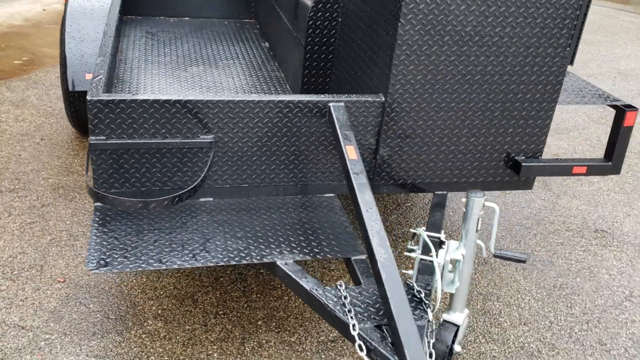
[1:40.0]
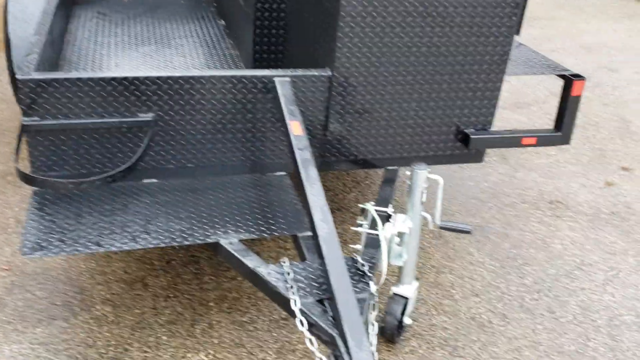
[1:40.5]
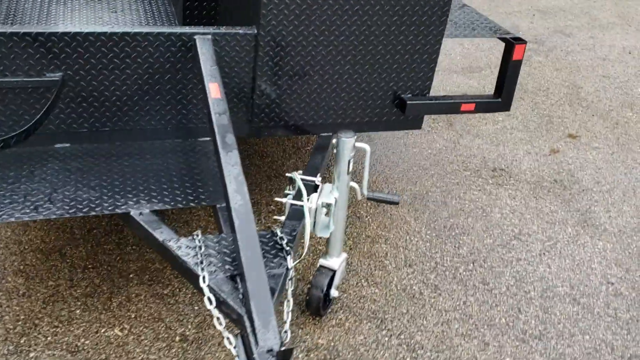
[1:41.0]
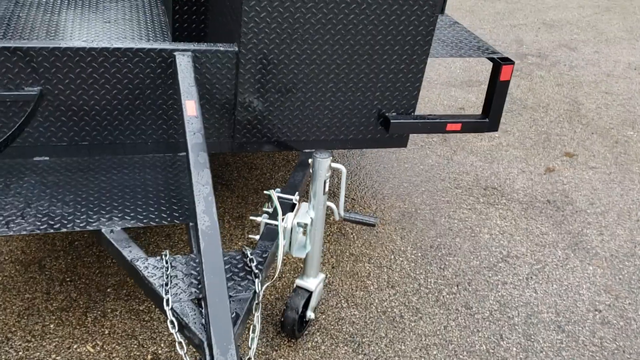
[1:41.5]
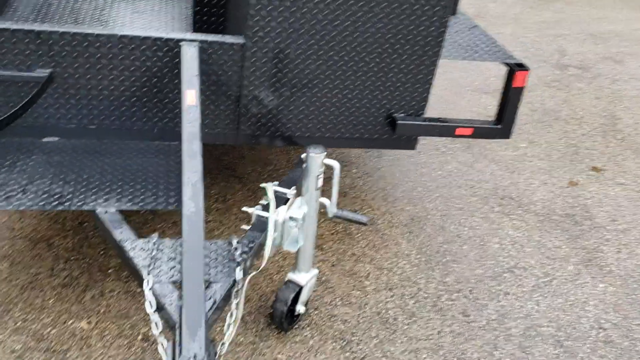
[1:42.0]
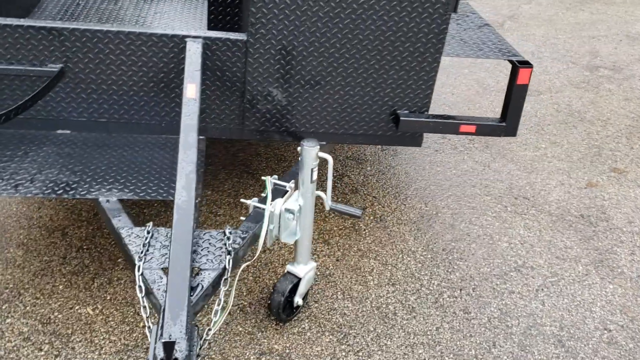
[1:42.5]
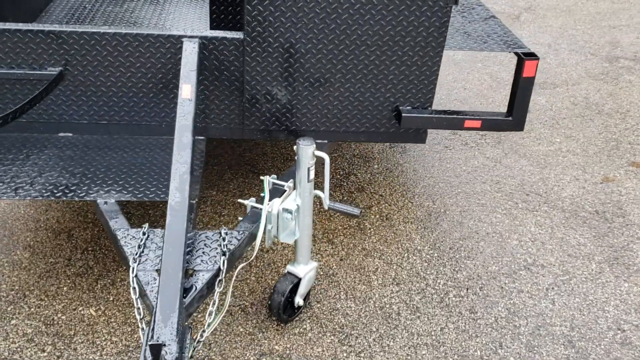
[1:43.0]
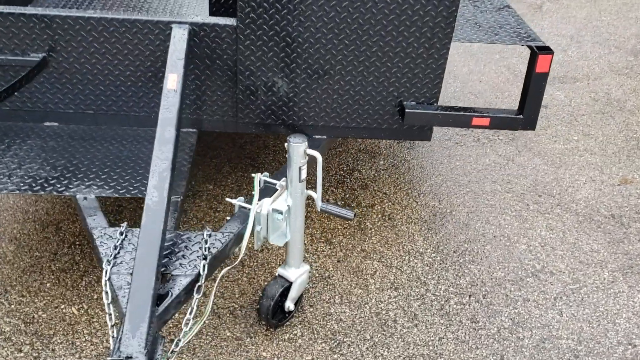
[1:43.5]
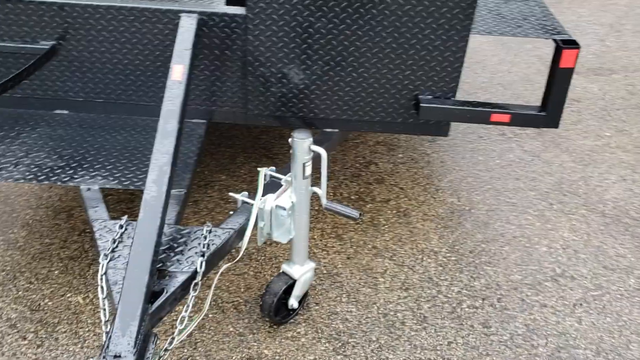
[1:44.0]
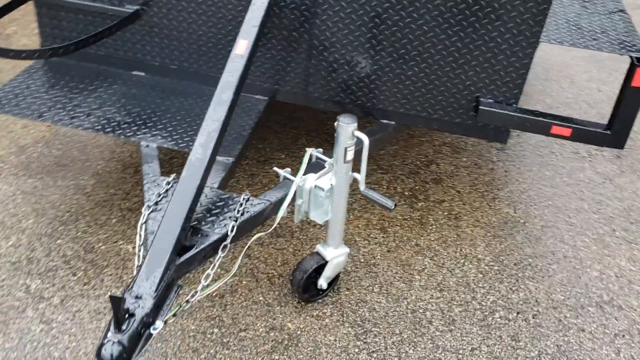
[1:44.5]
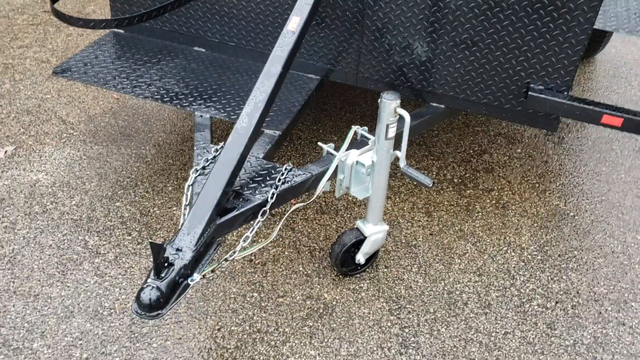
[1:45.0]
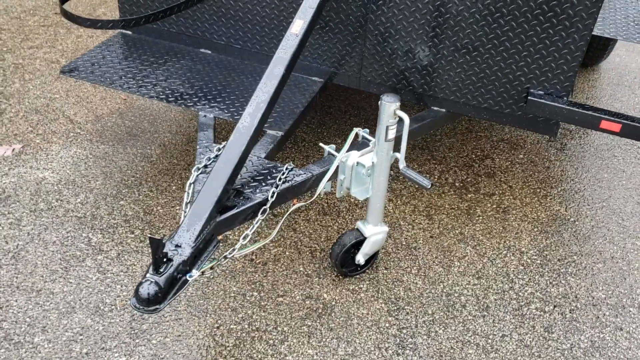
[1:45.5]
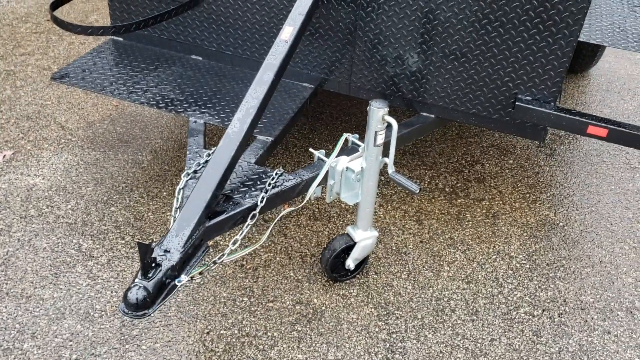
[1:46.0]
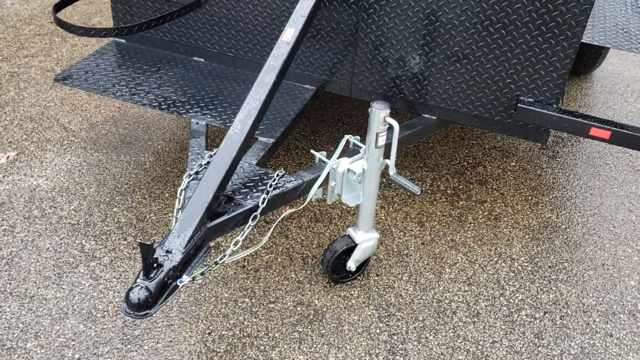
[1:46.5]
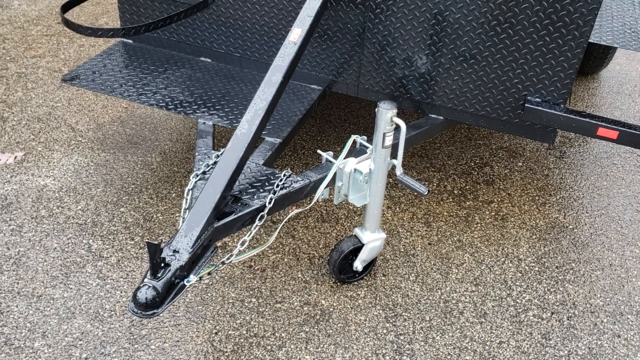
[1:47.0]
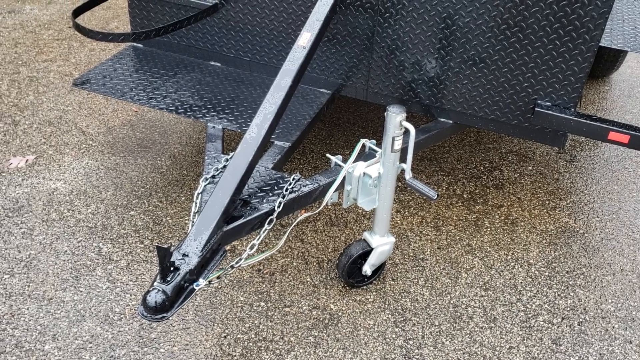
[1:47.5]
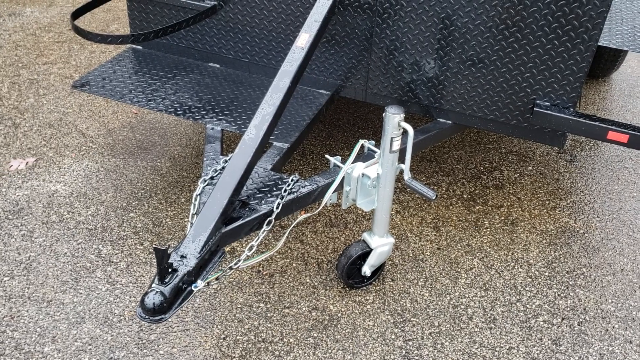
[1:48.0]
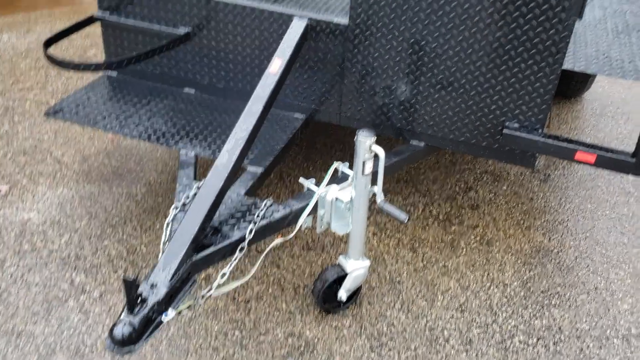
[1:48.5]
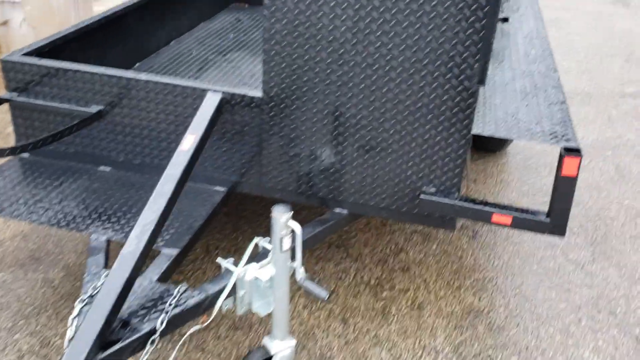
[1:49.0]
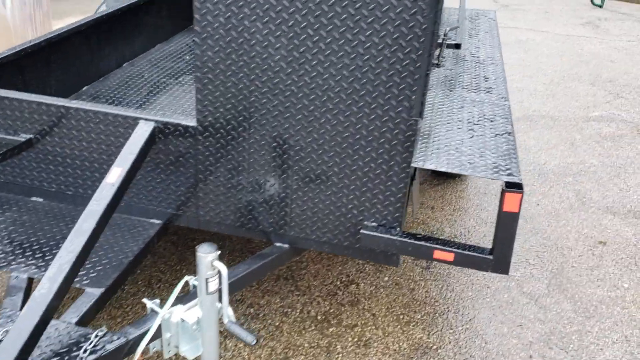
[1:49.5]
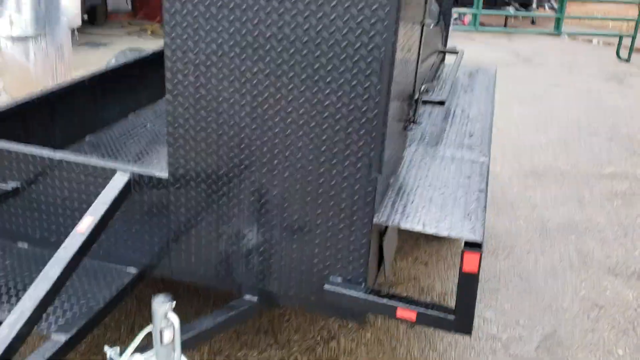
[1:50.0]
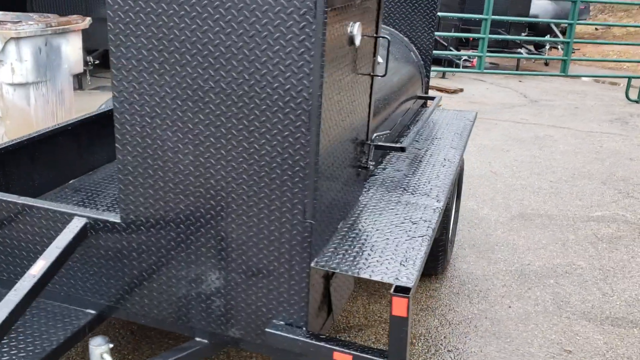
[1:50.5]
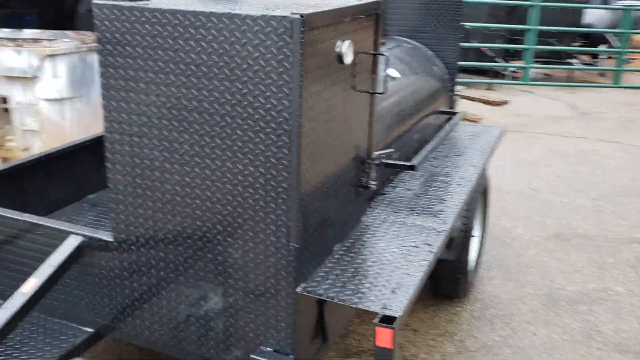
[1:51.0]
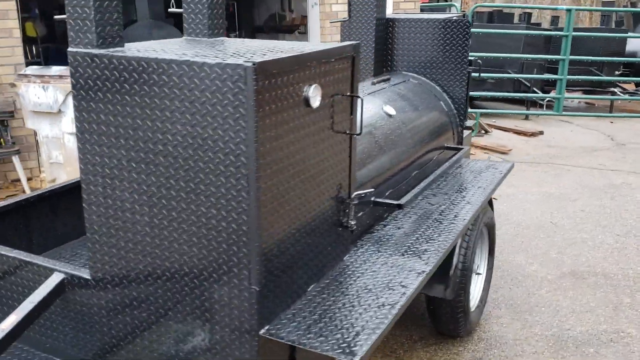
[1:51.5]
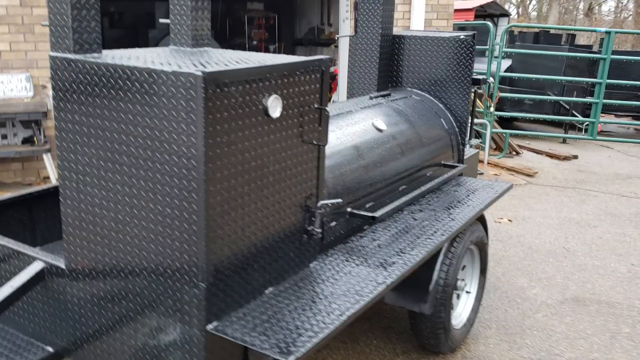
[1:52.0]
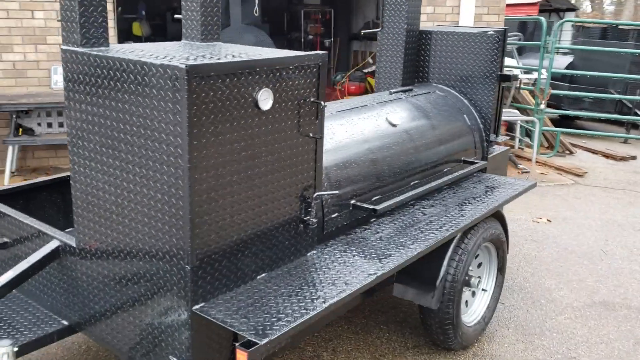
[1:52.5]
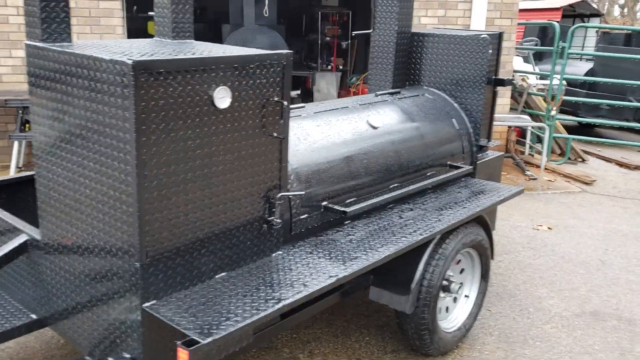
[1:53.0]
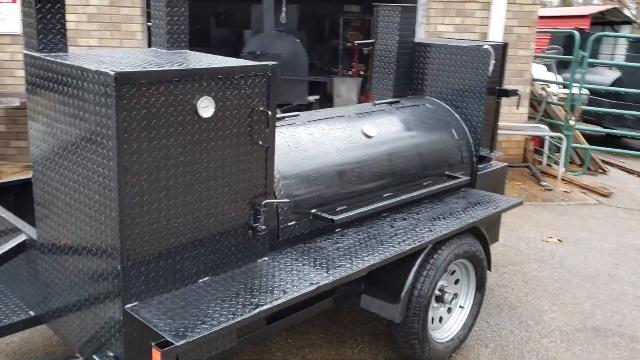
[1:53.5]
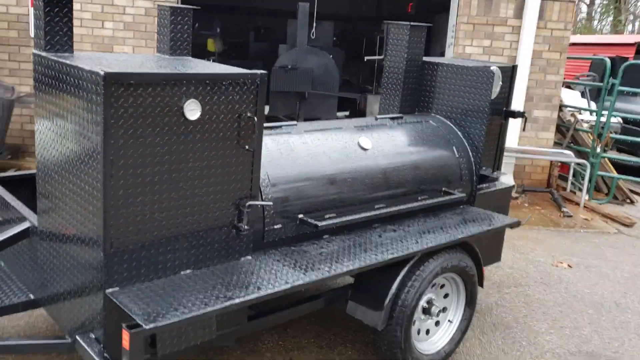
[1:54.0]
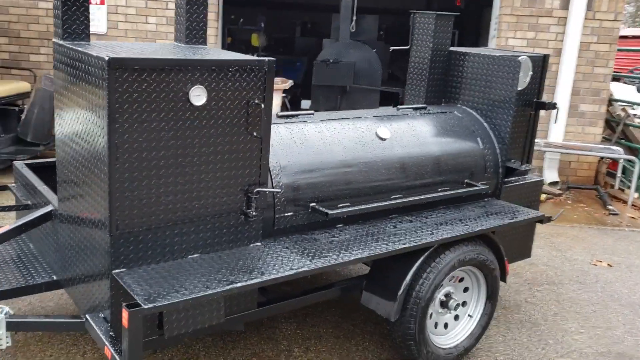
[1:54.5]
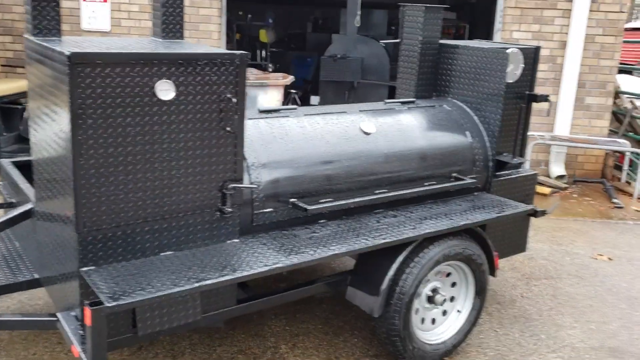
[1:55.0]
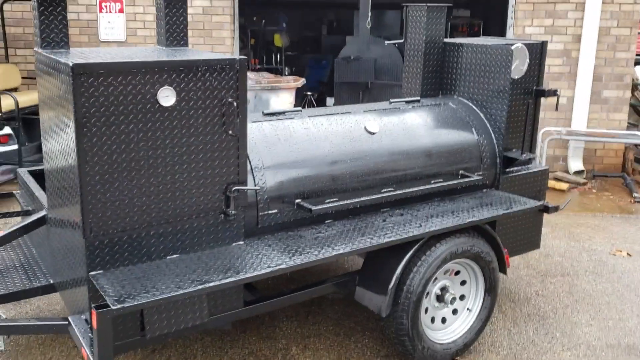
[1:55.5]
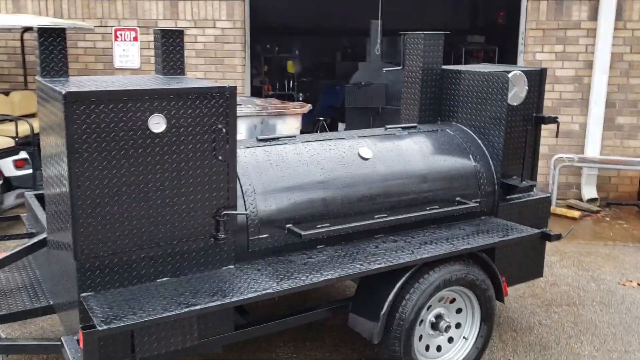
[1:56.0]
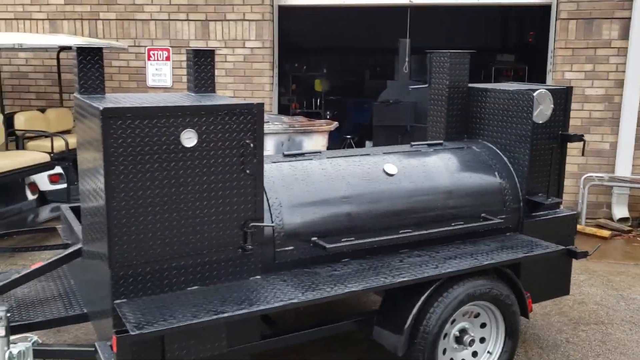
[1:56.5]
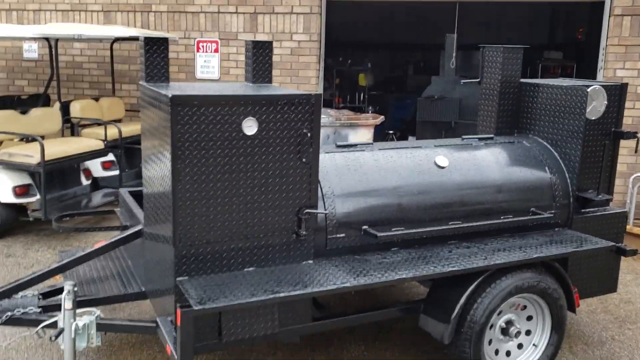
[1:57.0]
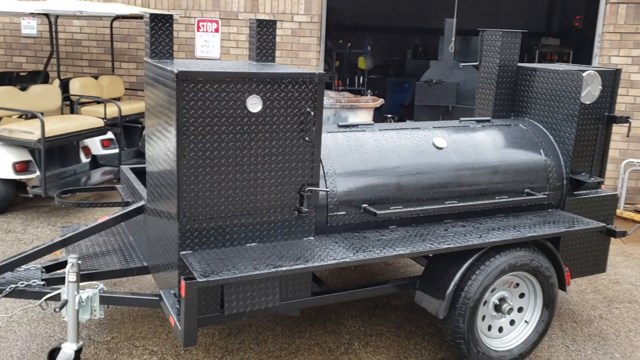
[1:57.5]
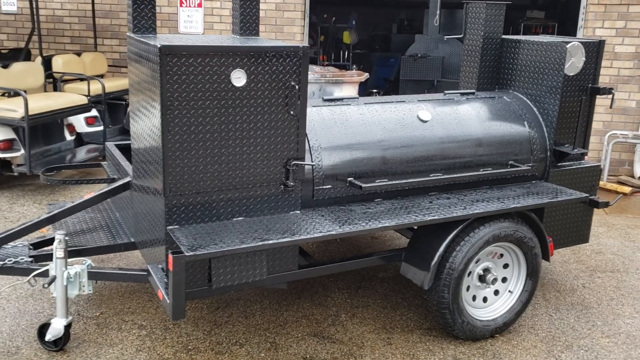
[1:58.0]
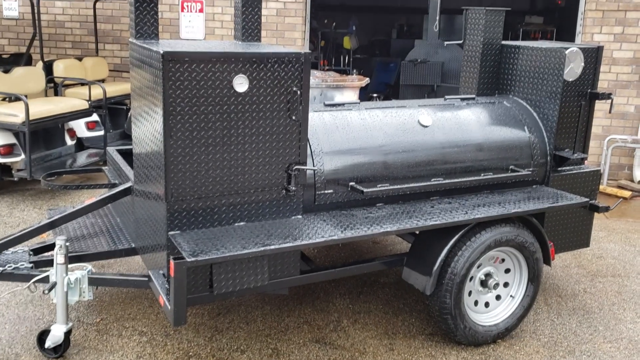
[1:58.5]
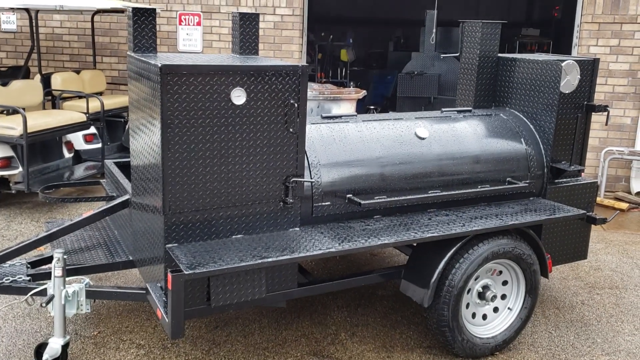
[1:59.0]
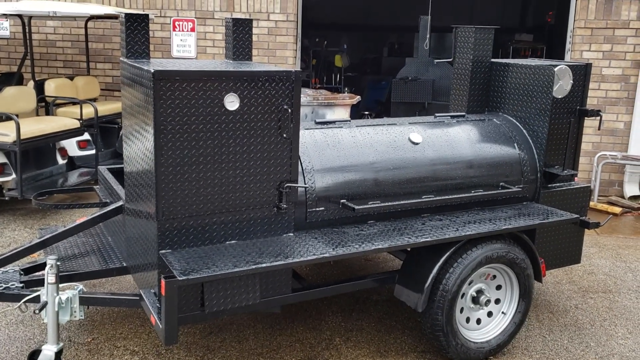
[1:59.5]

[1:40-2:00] The black trailer stands still, with no people around. The stop sign board is still there, and the two white golf cars are still standing. There is a pink chair, and a dustbin is at the back of the black trailer standing outside. Inside the storeroom another black trailer made of metal is standing. Cars are still passing on the road, and the other golf cars, the green one and the blue one, are still standing; the red lights are still there, and the blue van stands still. A black broken trailer is at the far back of this black trailer. On the trailer a silver chain is hung, and the trailer has a small wheel and two big wheels.